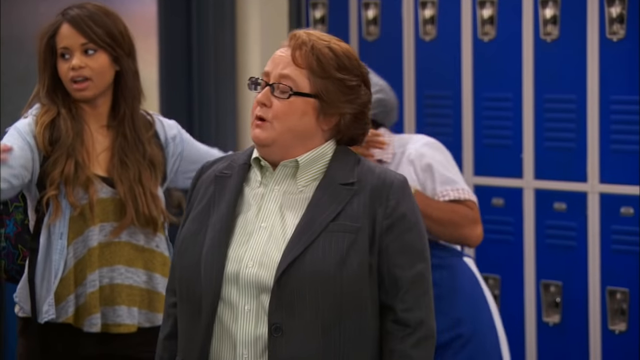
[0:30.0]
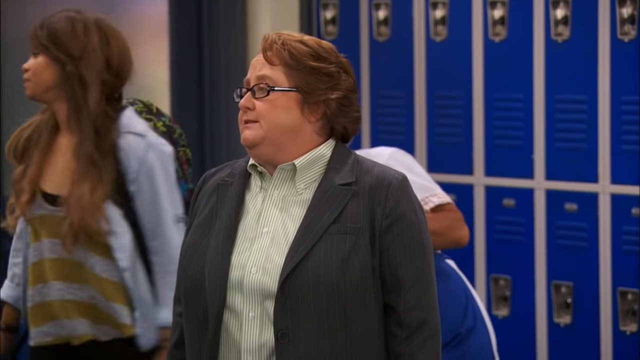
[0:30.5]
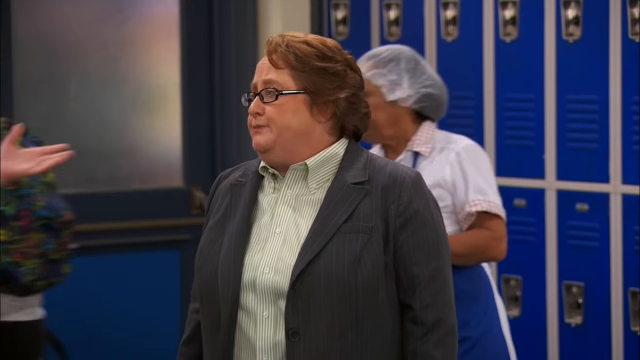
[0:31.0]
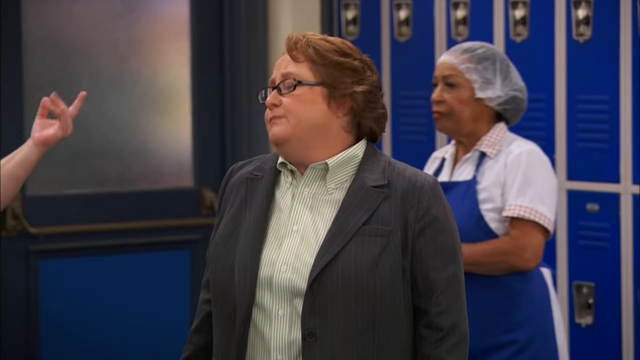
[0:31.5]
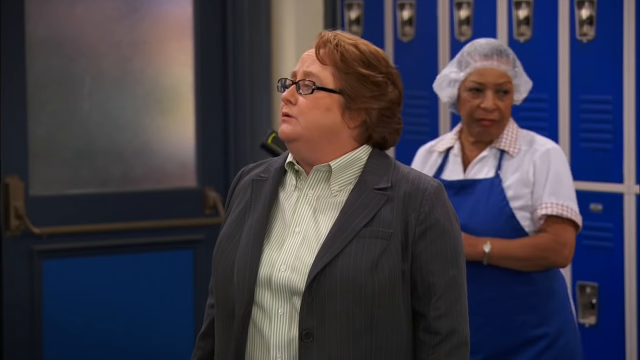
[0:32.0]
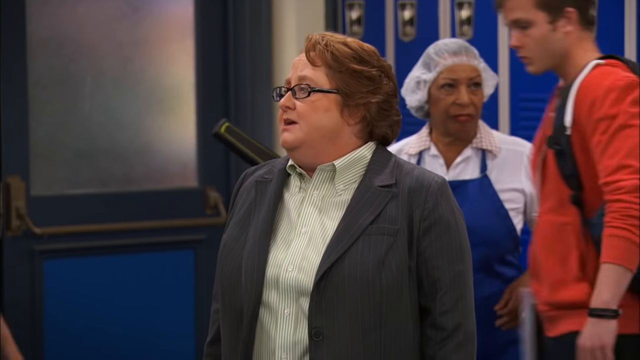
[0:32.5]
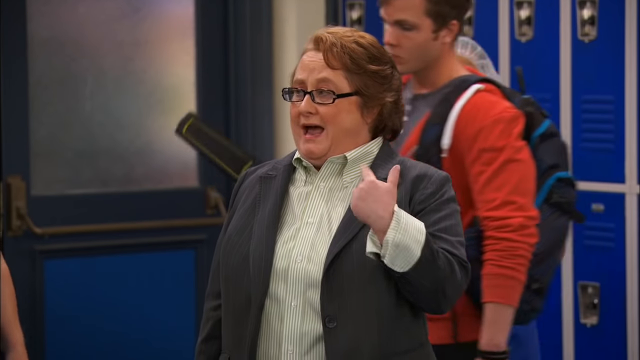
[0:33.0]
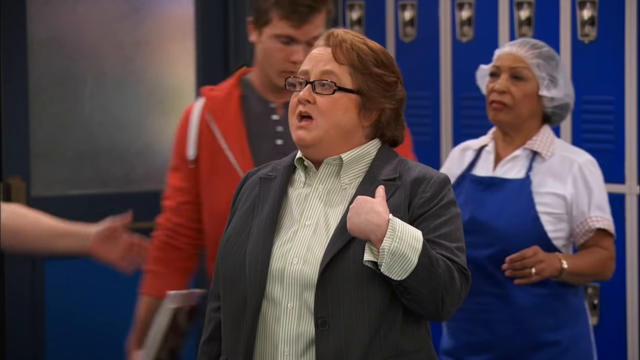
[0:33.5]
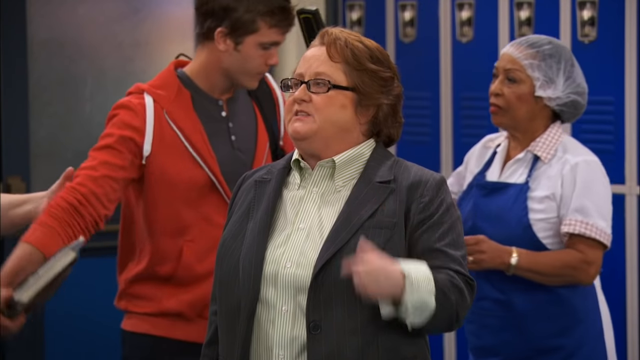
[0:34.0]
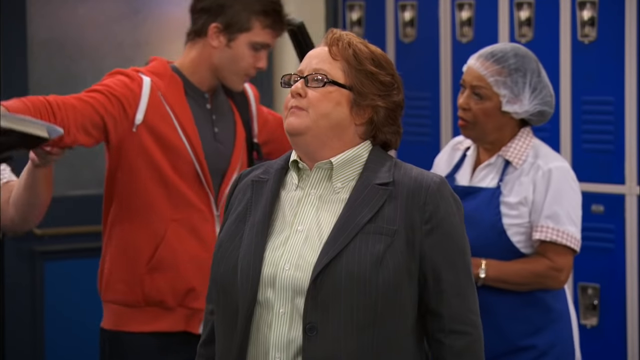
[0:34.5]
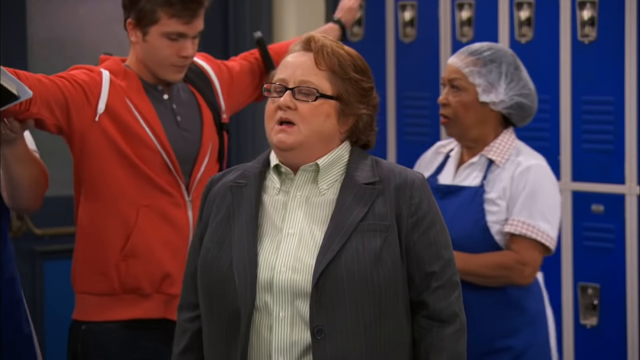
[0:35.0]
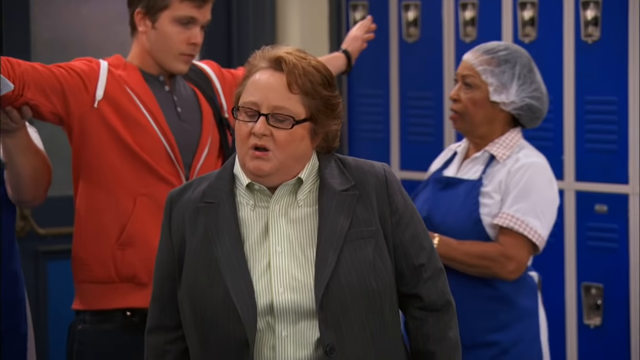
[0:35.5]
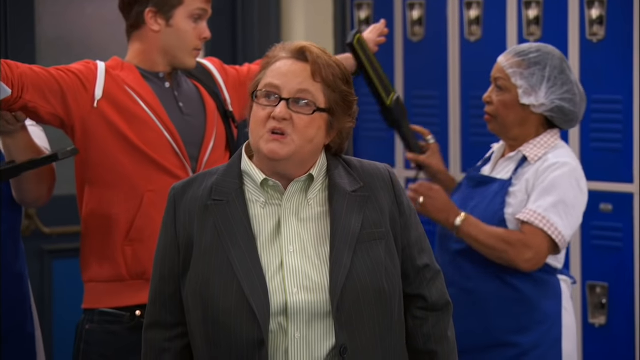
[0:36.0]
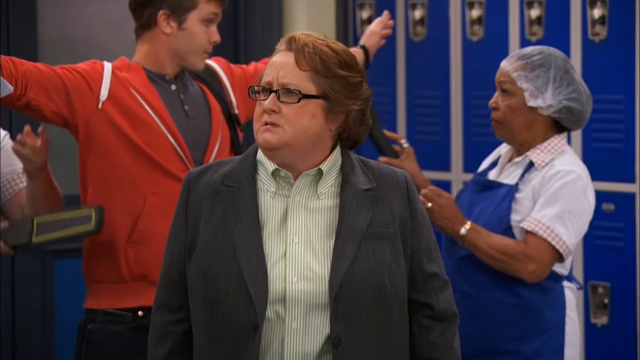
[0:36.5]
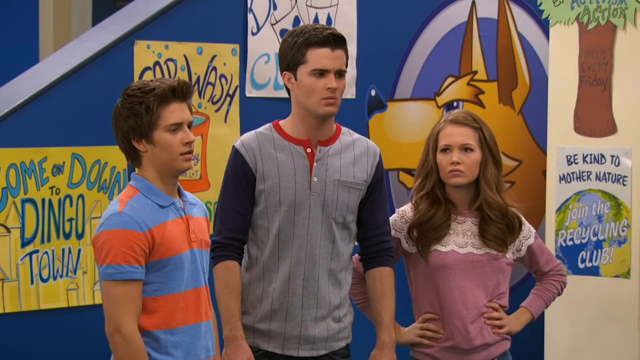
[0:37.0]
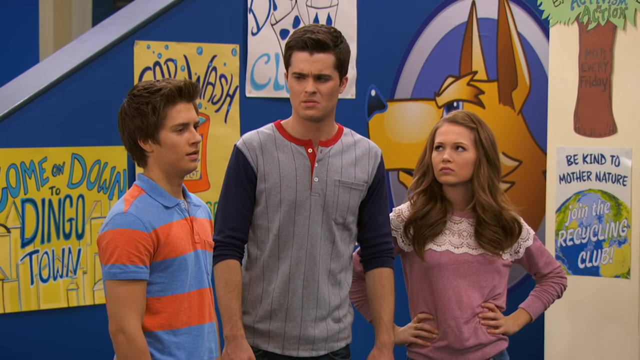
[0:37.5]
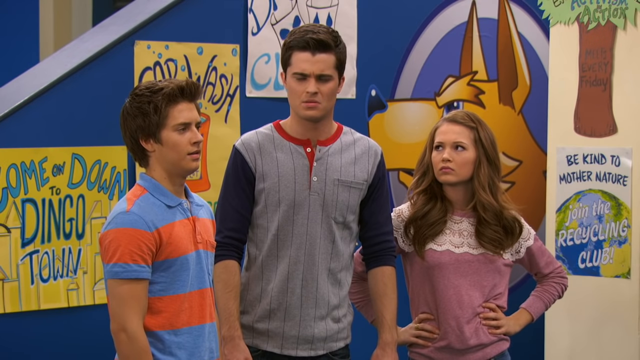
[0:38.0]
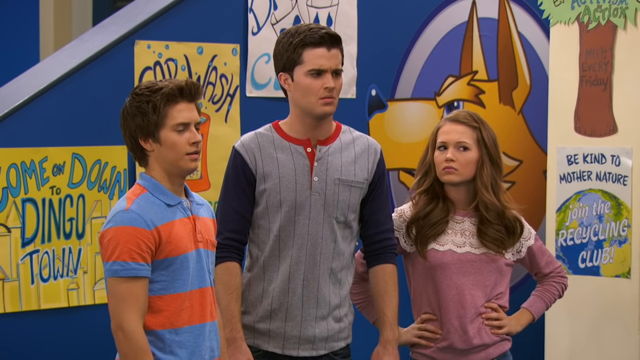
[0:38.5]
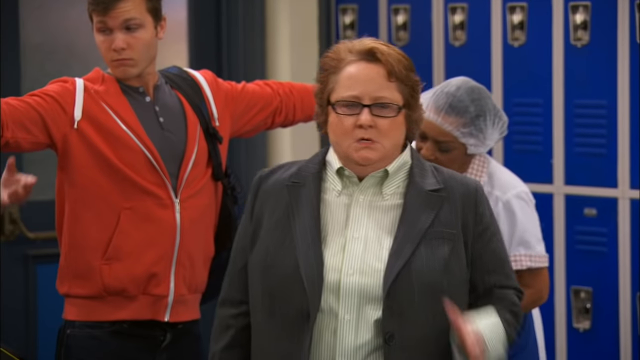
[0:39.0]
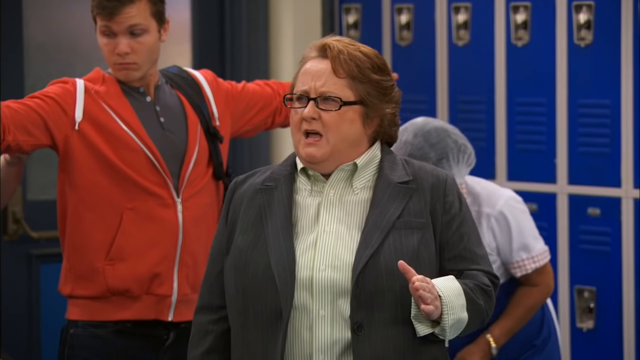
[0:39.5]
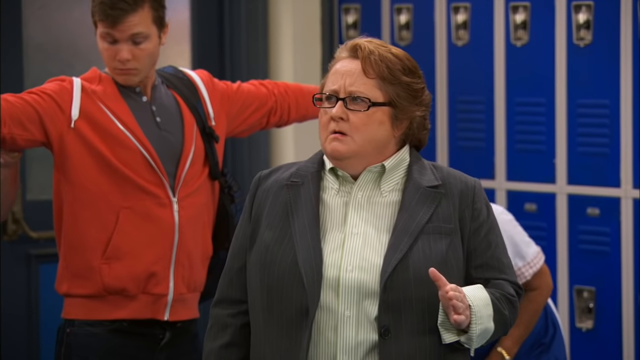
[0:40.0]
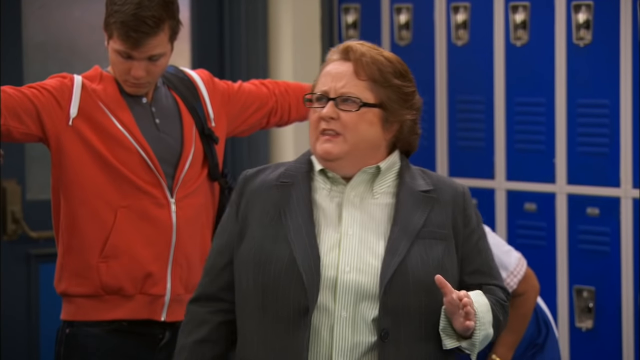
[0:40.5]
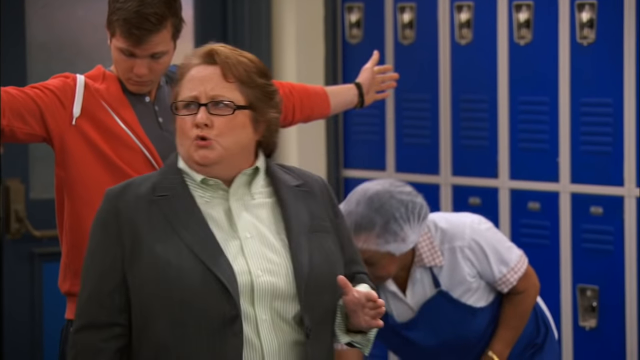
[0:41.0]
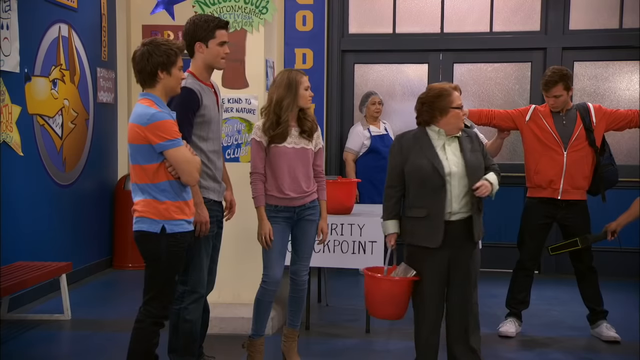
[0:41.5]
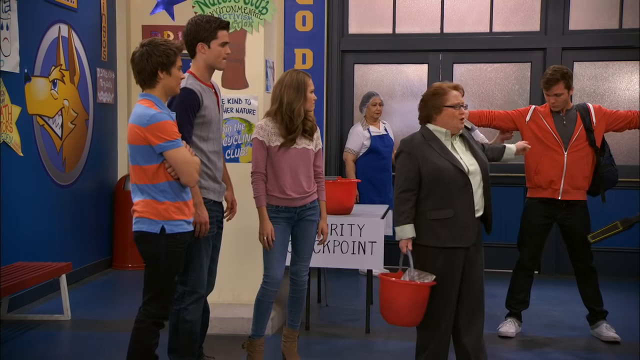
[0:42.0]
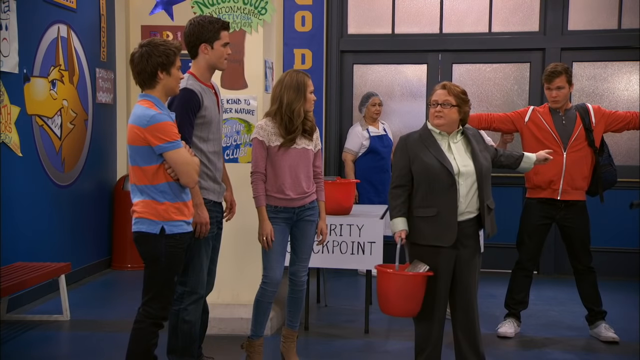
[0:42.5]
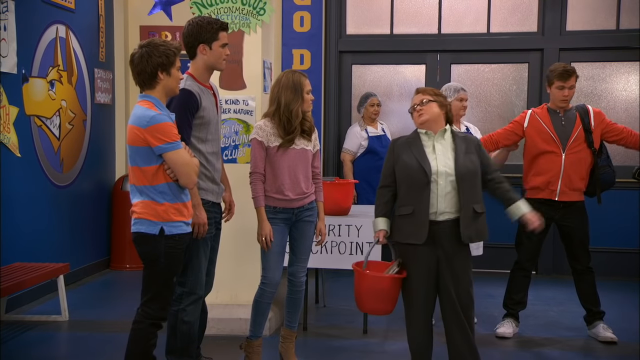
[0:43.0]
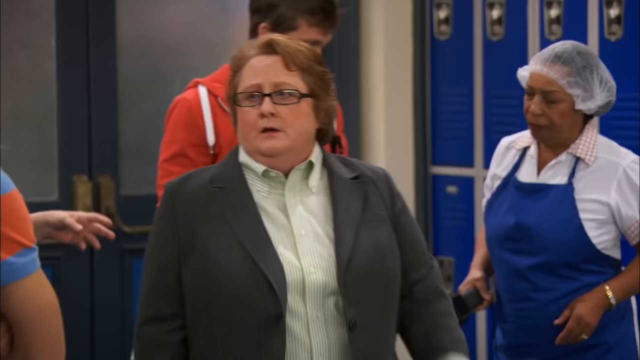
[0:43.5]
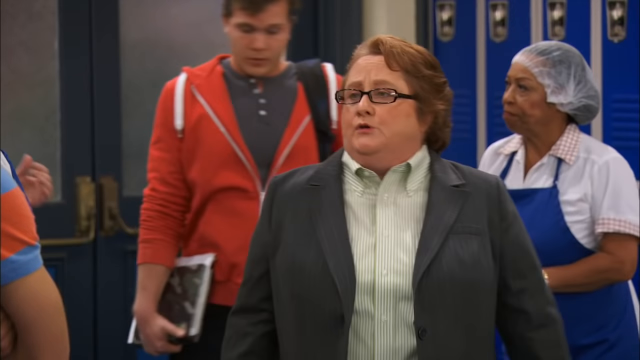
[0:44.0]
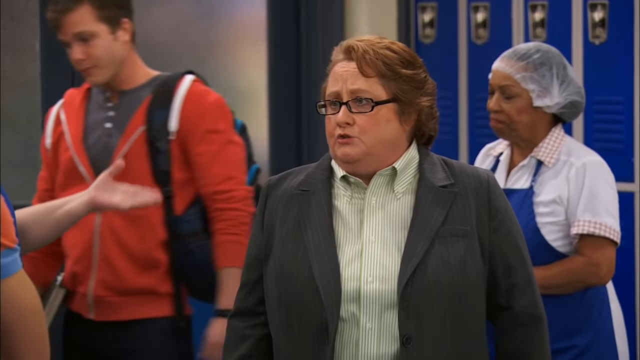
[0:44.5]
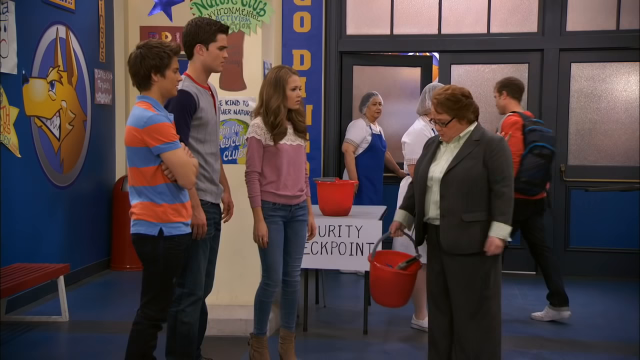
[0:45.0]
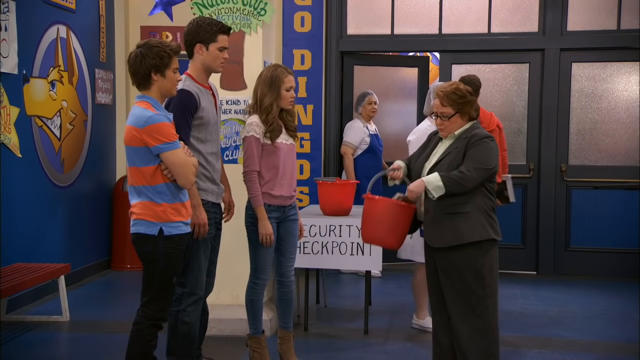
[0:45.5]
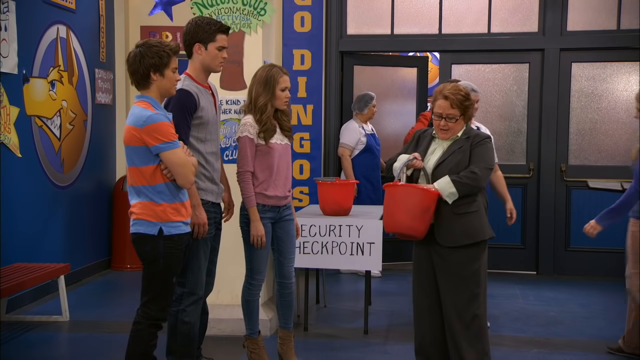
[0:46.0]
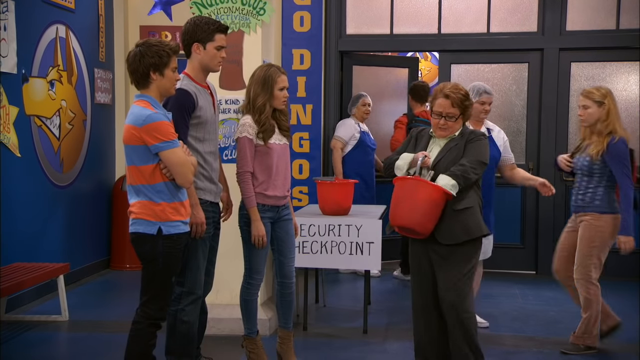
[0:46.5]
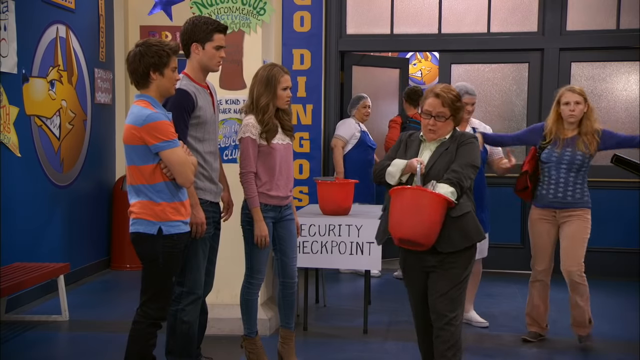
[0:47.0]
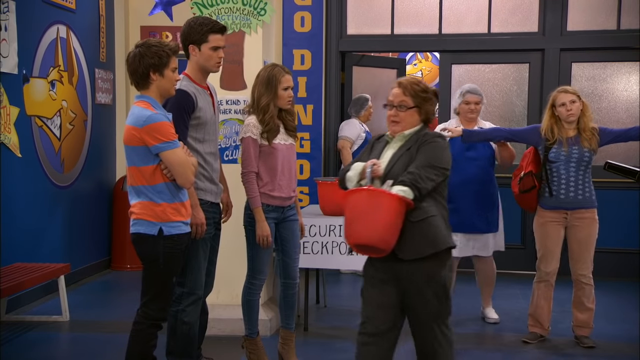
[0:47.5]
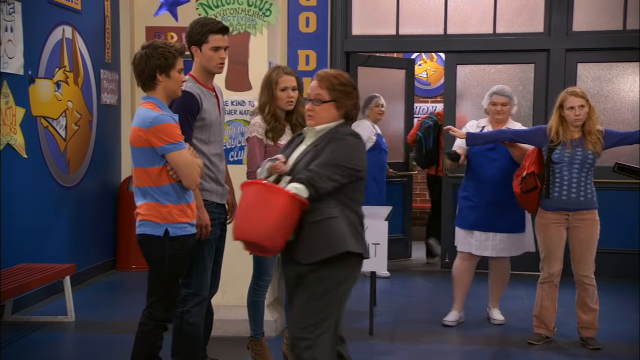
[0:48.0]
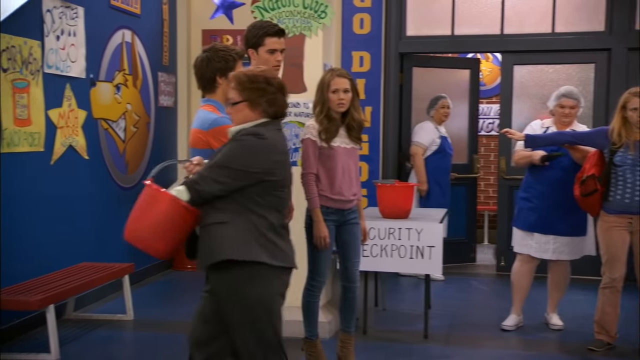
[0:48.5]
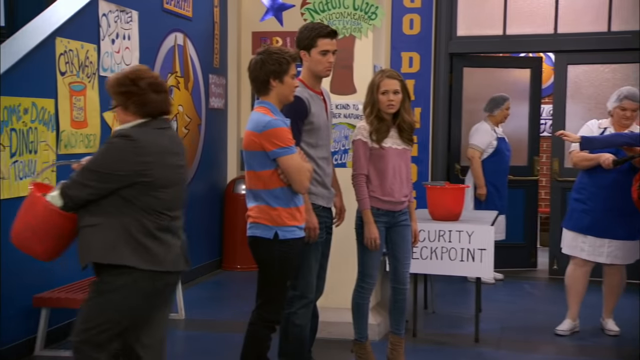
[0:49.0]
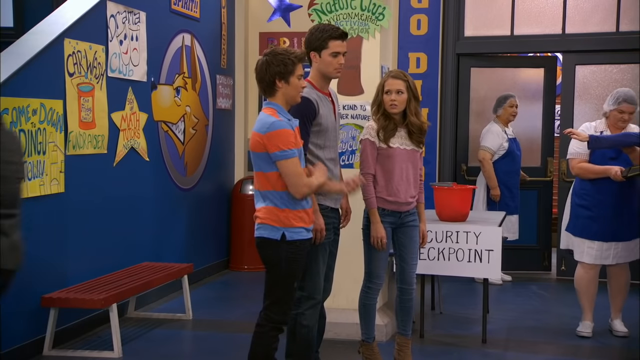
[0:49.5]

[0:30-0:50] The lady in black glasses, holding the bucket, talks to the three kids who came down the steps, in the same indoor setting. She looks agitated. While talking to them, she points to the other kids behind them. A Black lady with a security wand wands the kids as they go through; she has a hairnet on and wears a white shirt with a blue apron. She wands a kid in a dark orange hoodie with a backpack. Another lady on the other side of her is wanding the children as well. On the wall behind the three kids is a drawing of a tree with some words on it, and there is also a brown bench. The lady with the glasses then walks off.